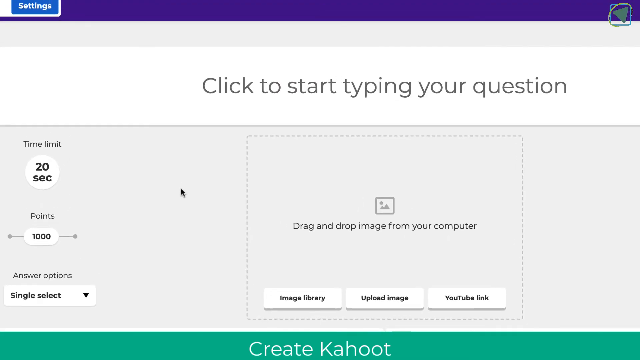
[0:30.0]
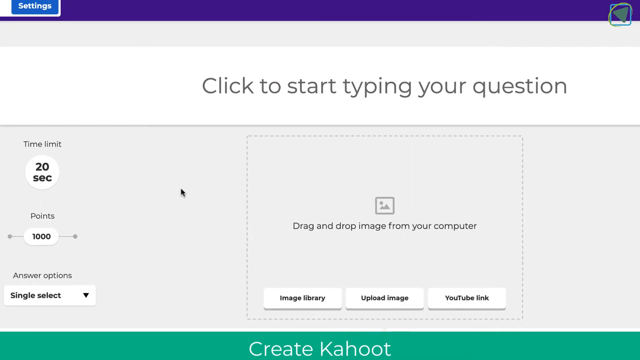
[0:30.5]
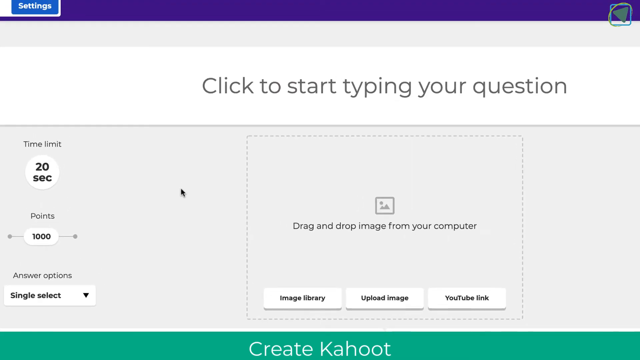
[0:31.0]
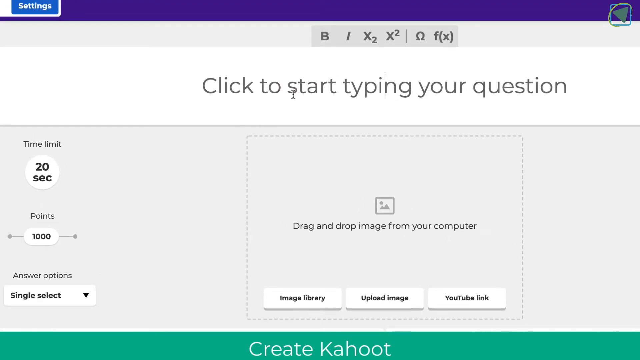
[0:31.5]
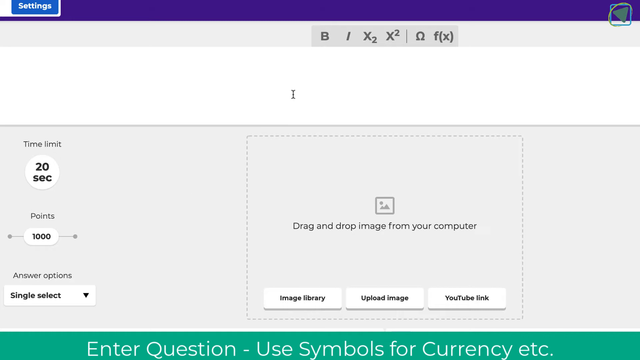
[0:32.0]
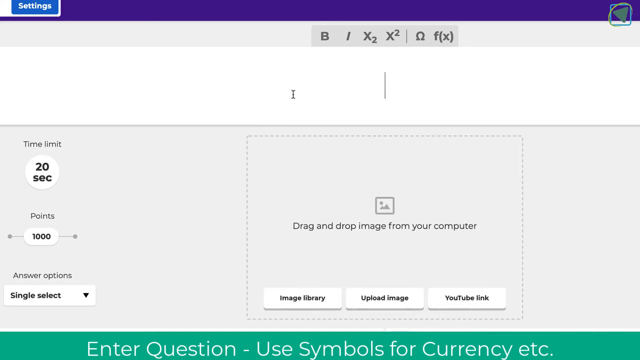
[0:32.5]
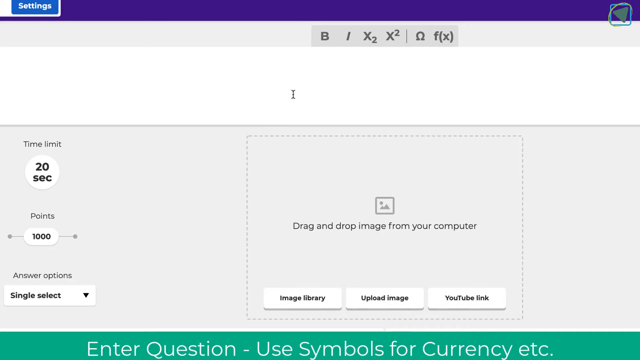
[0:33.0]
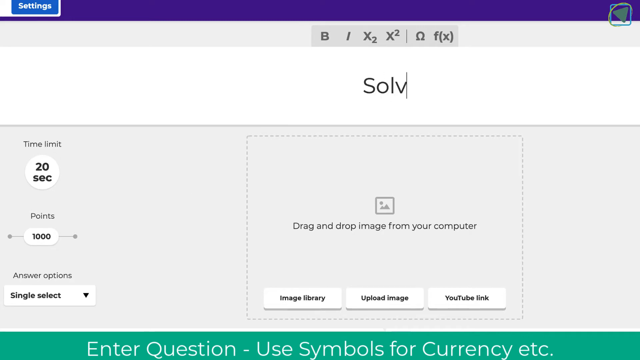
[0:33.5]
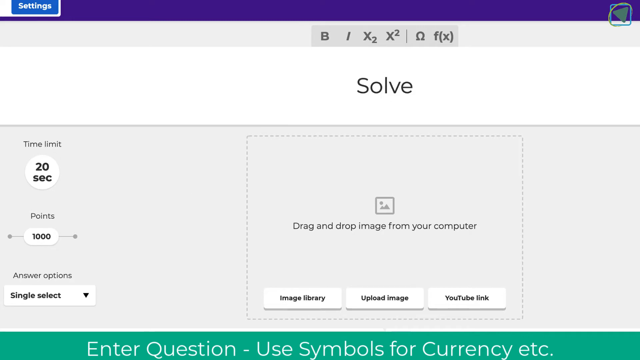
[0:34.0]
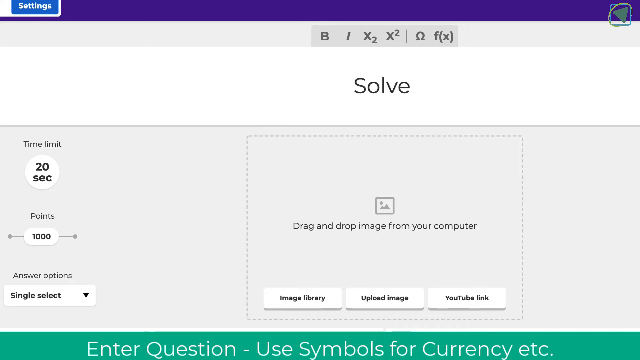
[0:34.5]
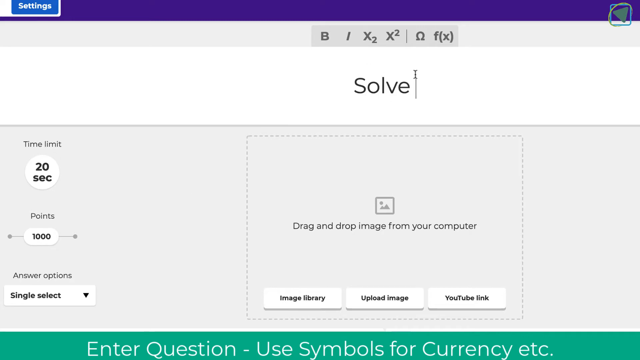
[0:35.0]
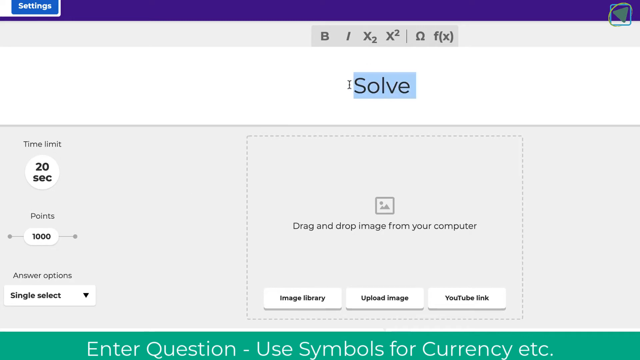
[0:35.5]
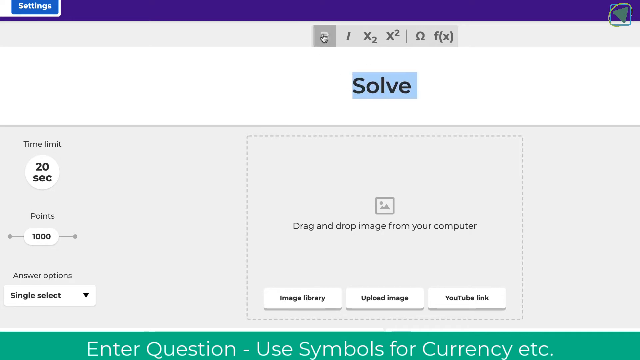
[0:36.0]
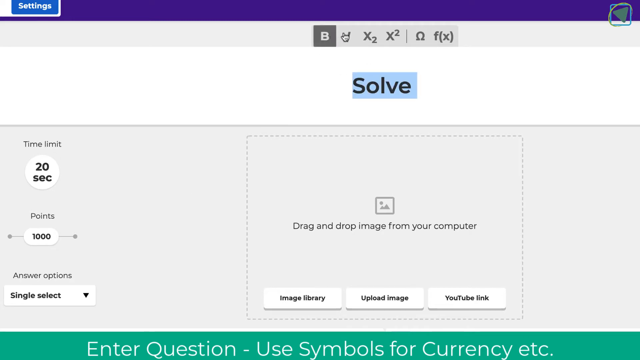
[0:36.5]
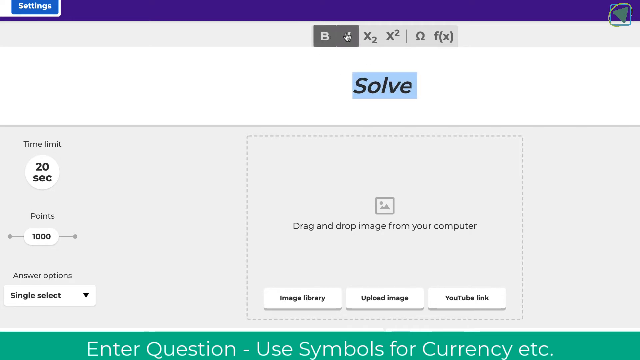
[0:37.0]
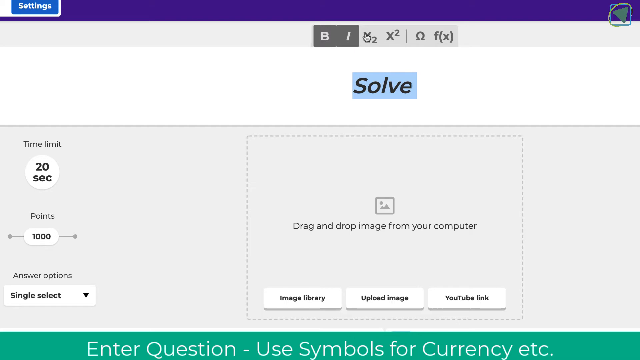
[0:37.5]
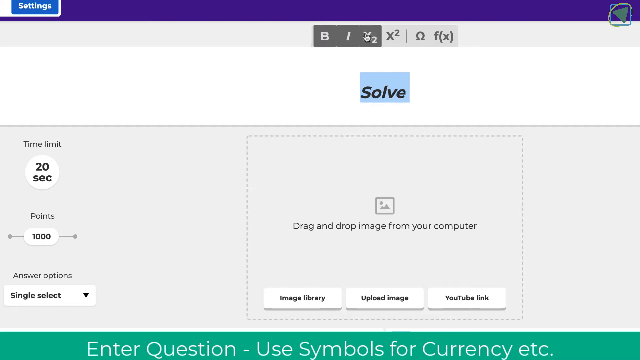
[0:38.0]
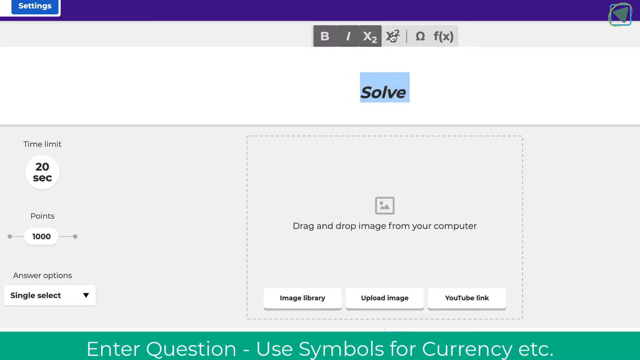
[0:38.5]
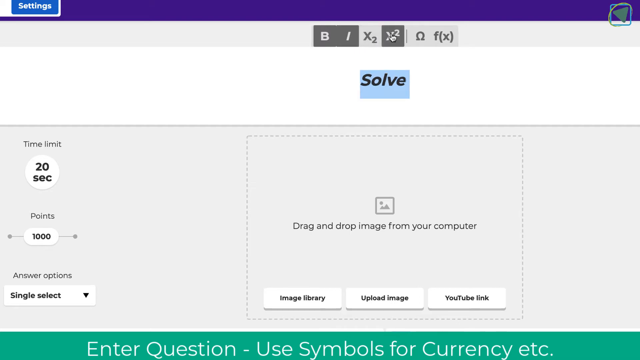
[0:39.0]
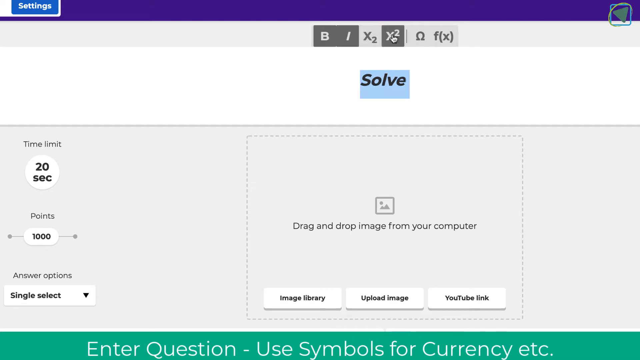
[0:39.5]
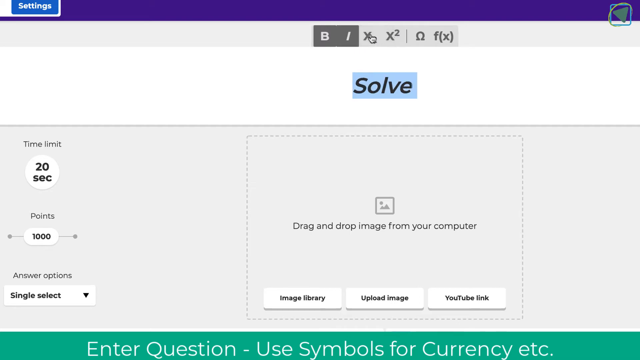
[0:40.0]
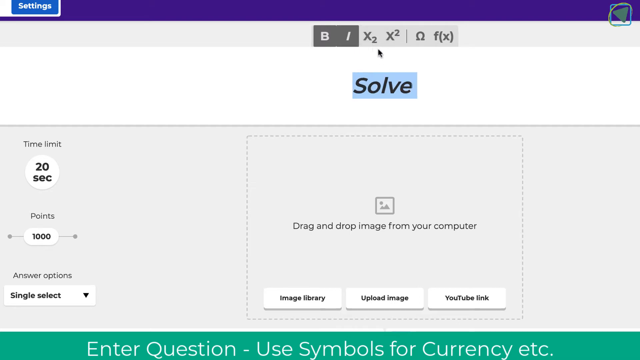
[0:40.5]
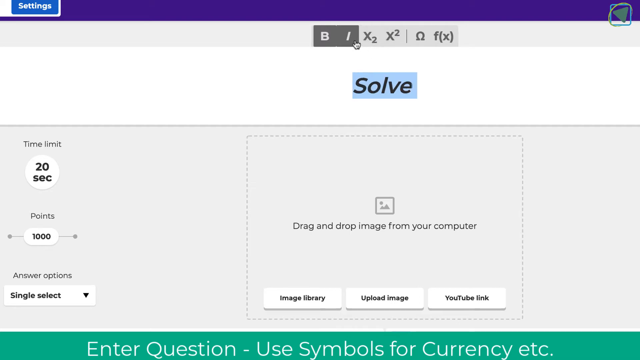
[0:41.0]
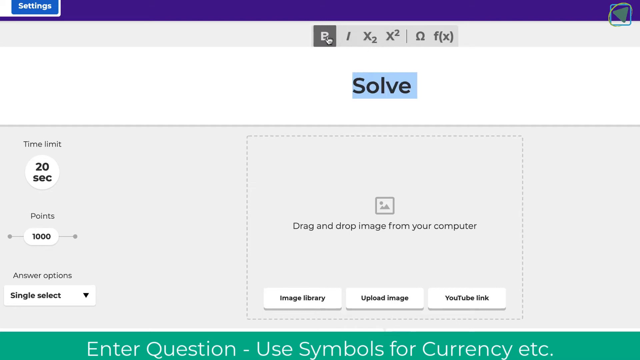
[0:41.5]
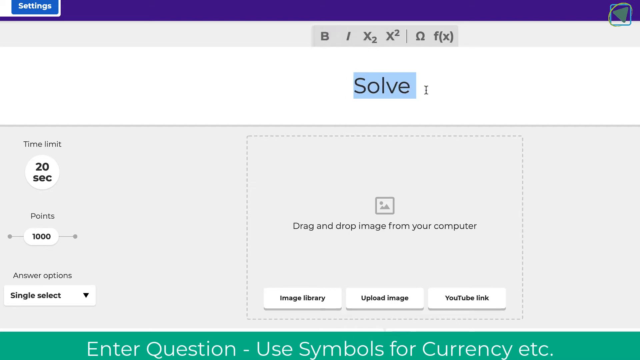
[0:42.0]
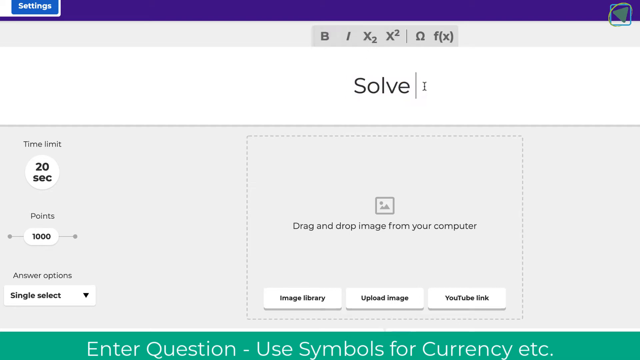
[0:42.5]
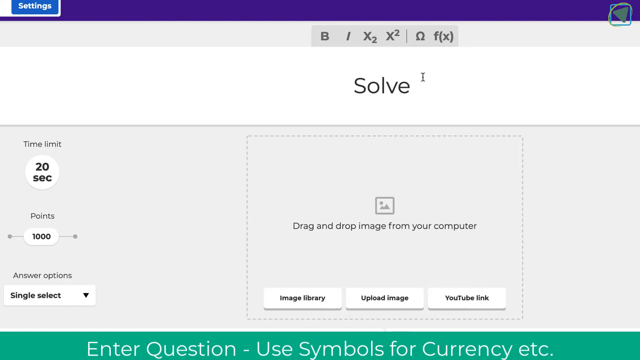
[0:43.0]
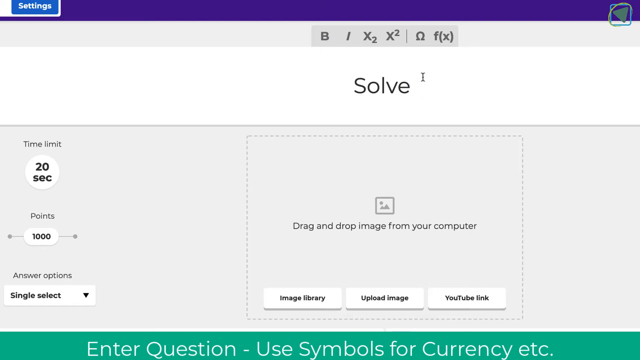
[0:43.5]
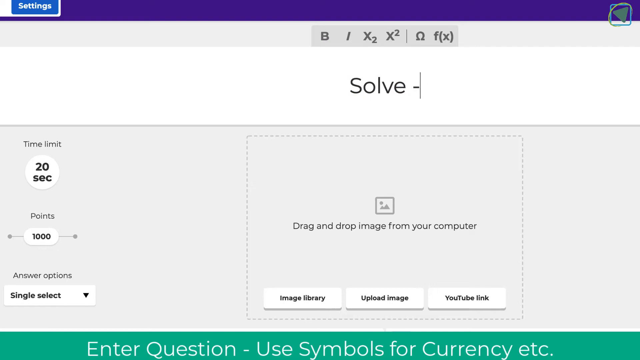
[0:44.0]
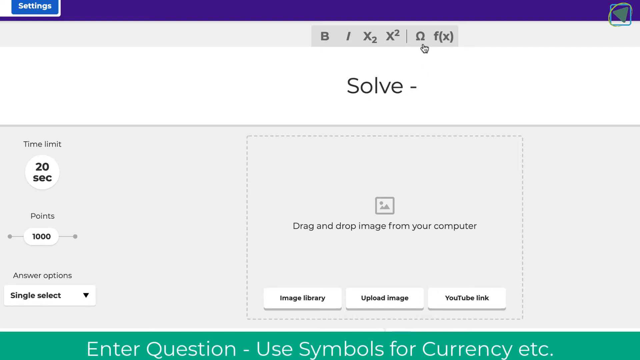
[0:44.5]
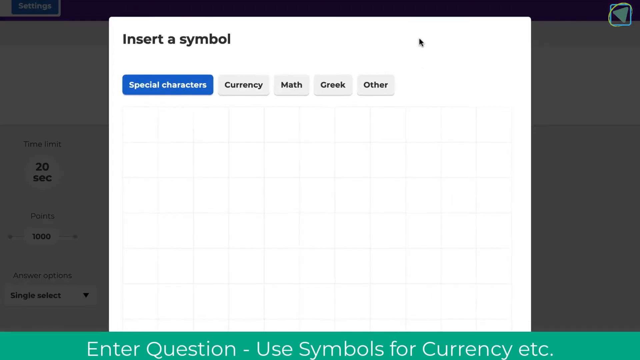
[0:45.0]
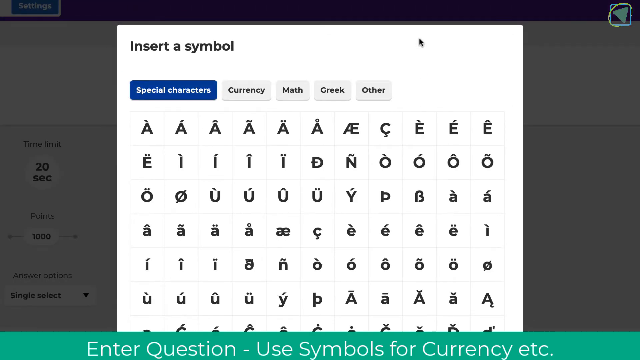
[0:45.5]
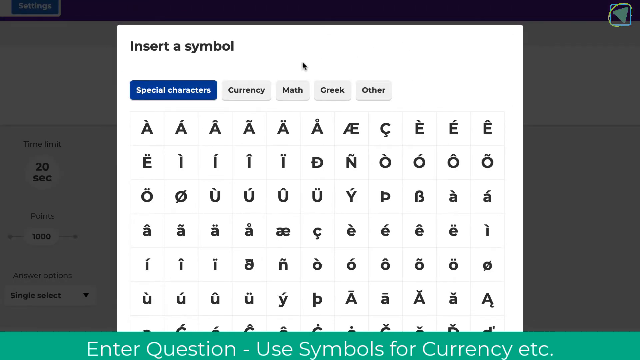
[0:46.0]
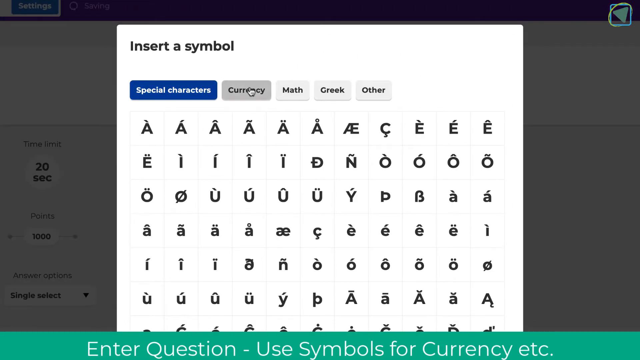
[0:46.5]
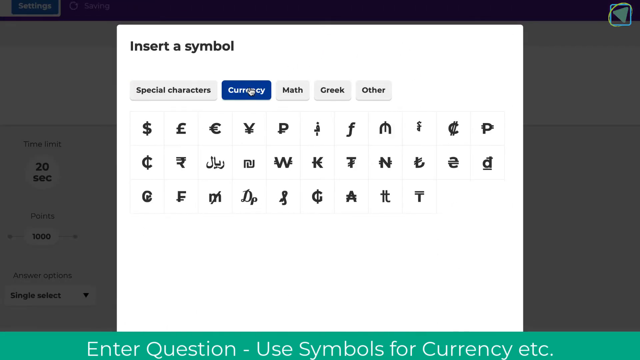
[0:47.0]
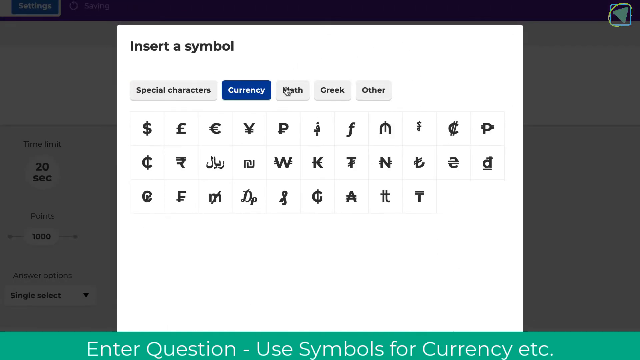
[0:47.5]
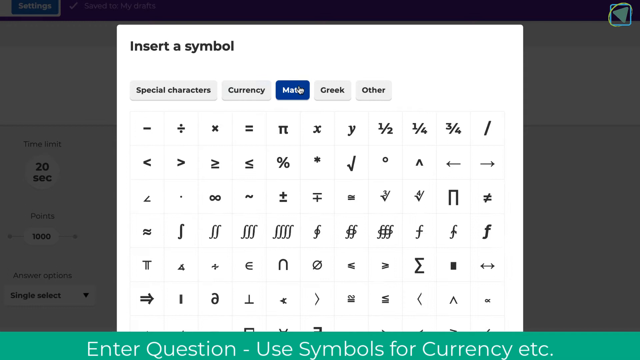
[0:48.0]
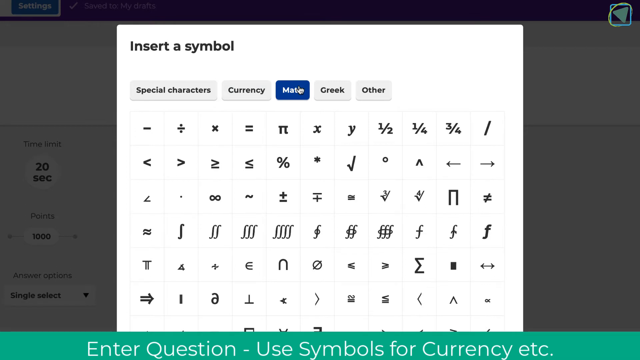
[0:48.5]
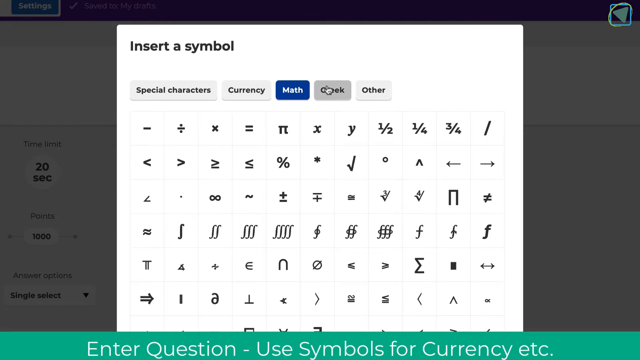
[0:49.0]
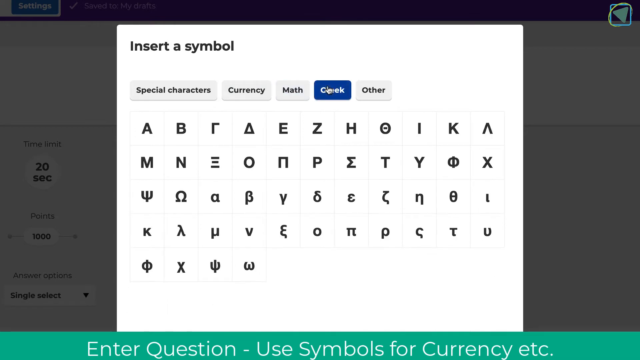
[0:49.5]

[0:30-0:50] Phil navigates the Kahoot user interface, which shows a kind of blank canvas with nothing added yet. He goes to the top bar, a white space containing the black text "click to start typing your question". When he moves his cursor there and clicks, that text disappears. He types the word "Solve" followed by a space and highlights it. He then goes to the gray menu just above, which has options for bold, italics, subscript and superscript, as well as some symbols and formula functions. He turns the text bold, then italics, then subscript, then superscript, which automatically turns the subscript off. He then turns these settings off, starting with the superscript, then the italics, and finally the bold. He clicks to unhighlight the word "Solve", adds a hyphen, and moves his cursor up to the omega symbol for adding special symbols. It opens a new menu of special characters with currency, math, Greek and other types of symbols. He clicks on currency, then math, then Greek, without selecting anything.